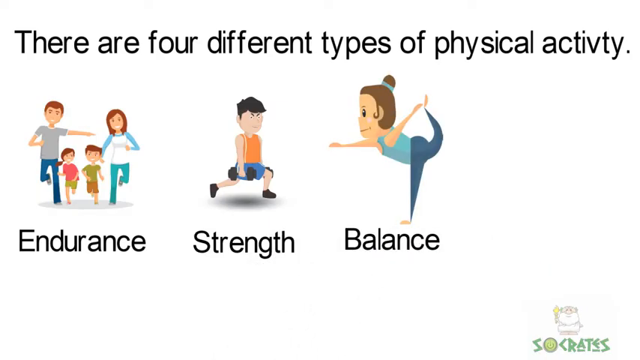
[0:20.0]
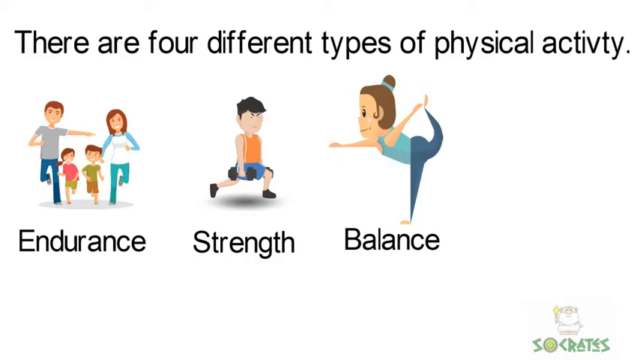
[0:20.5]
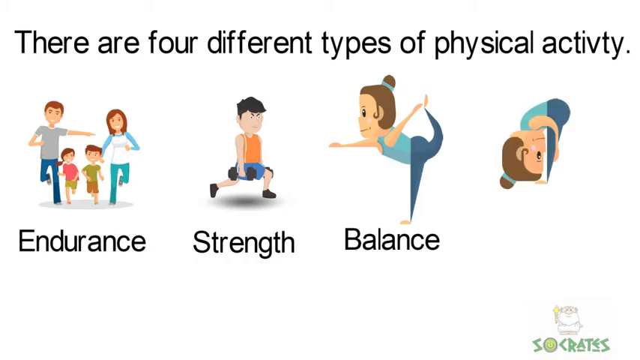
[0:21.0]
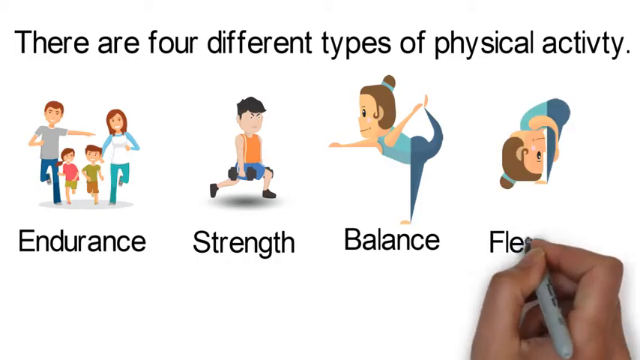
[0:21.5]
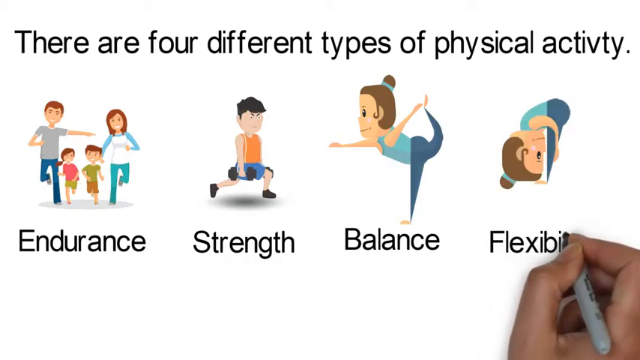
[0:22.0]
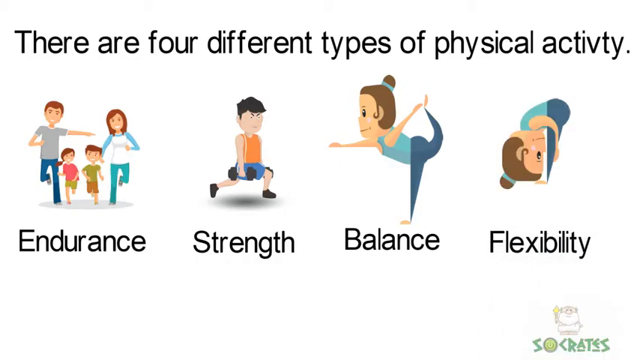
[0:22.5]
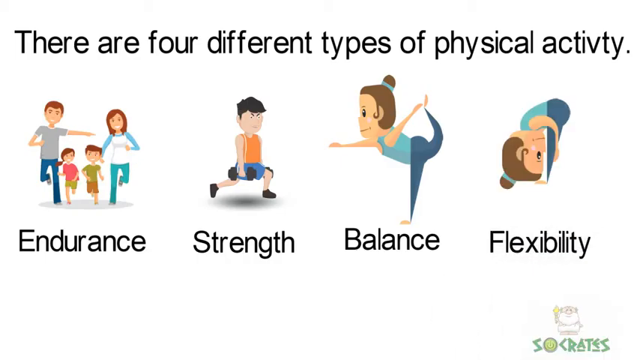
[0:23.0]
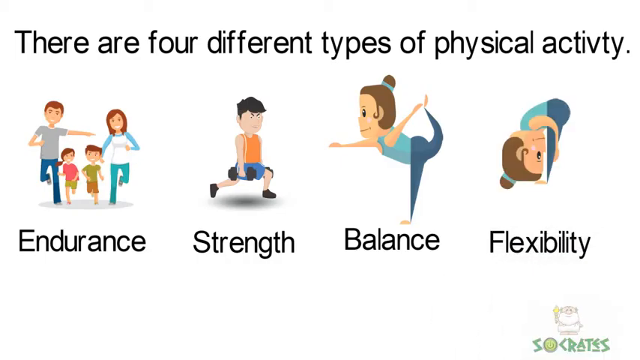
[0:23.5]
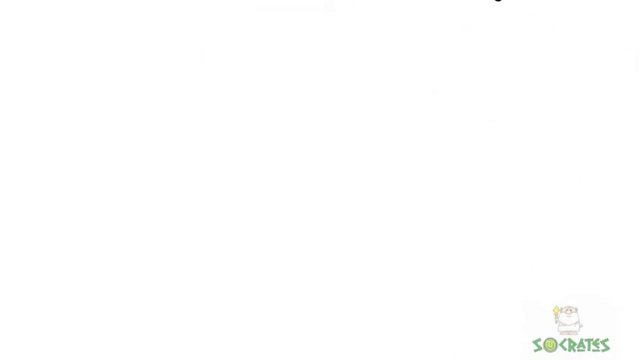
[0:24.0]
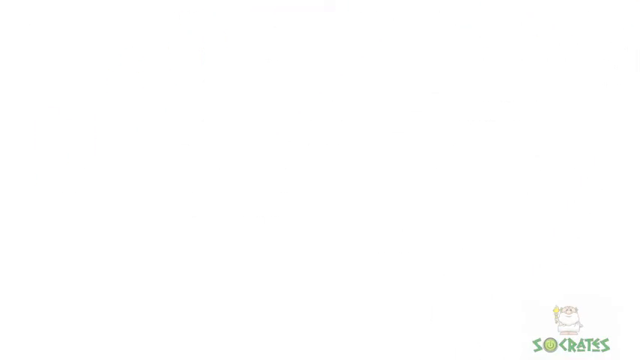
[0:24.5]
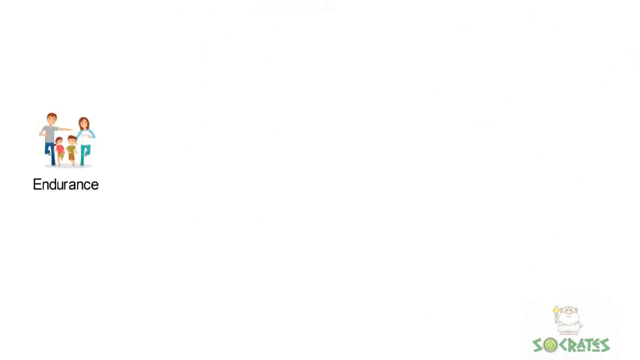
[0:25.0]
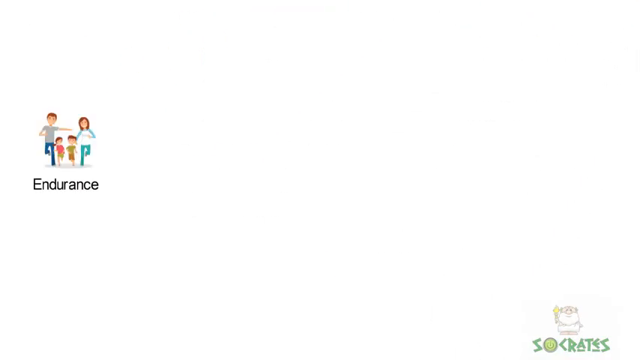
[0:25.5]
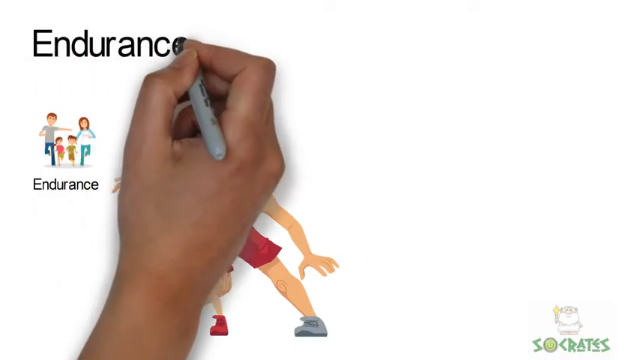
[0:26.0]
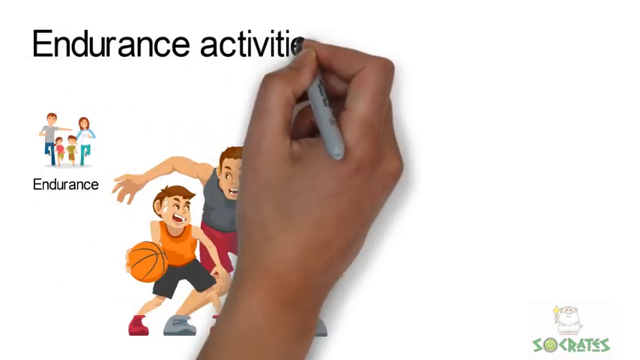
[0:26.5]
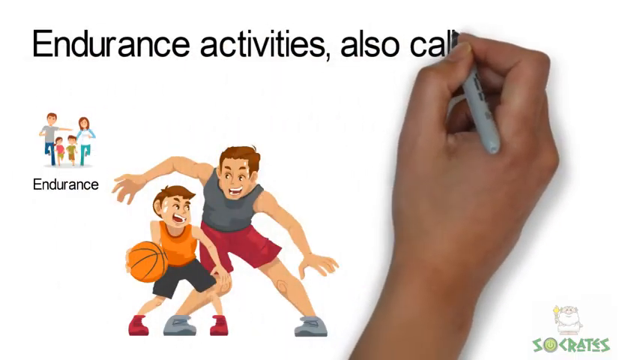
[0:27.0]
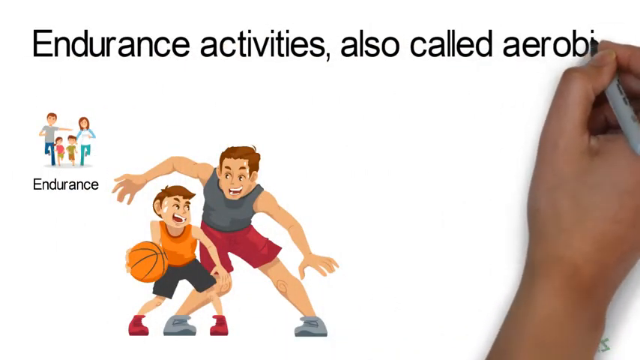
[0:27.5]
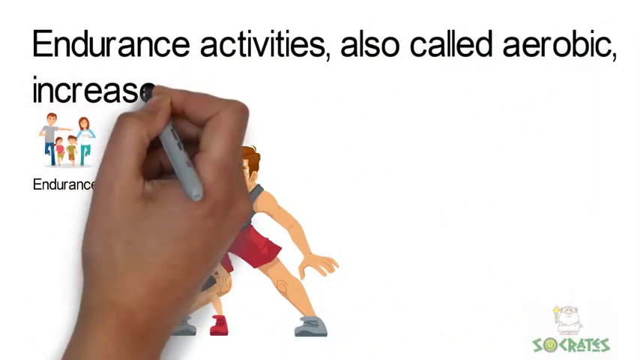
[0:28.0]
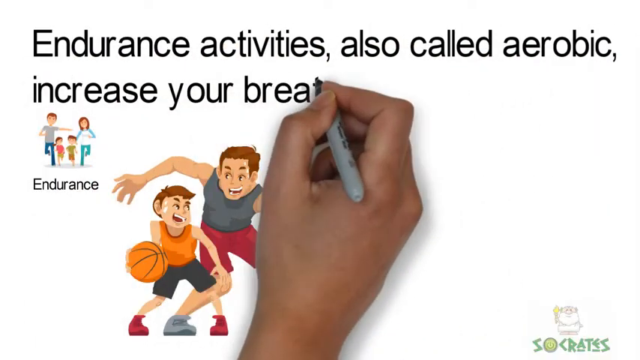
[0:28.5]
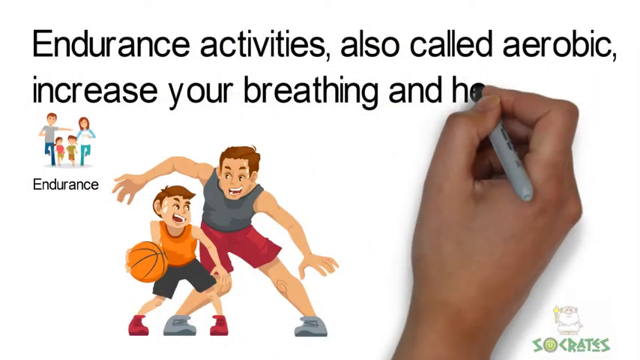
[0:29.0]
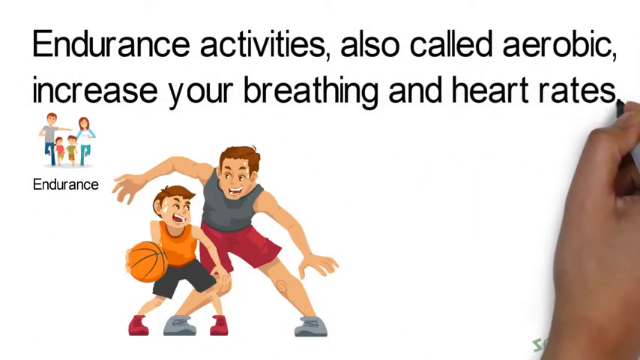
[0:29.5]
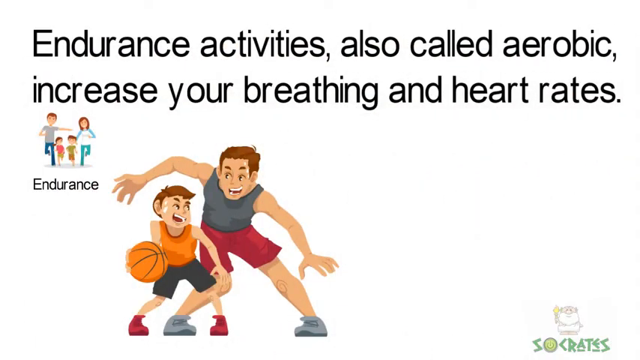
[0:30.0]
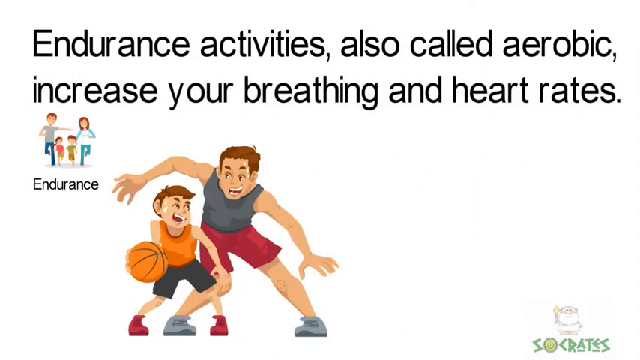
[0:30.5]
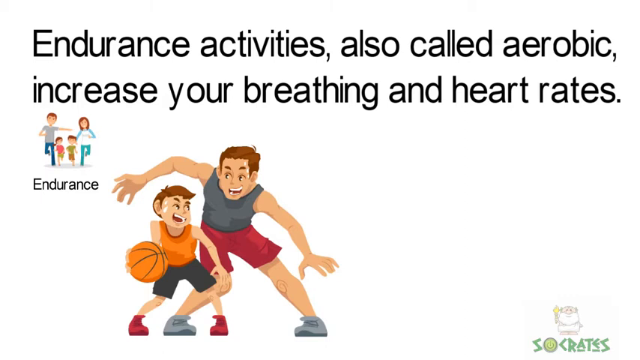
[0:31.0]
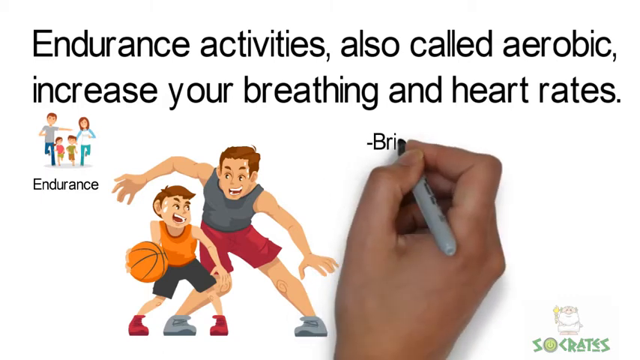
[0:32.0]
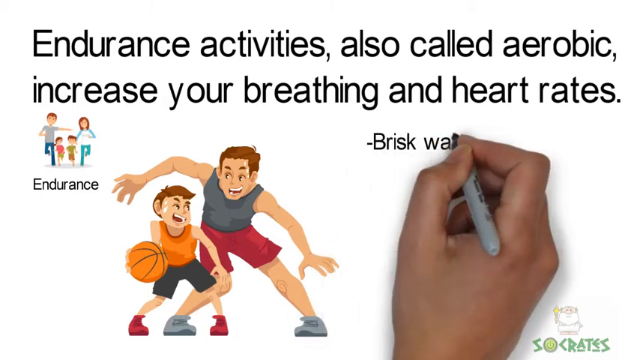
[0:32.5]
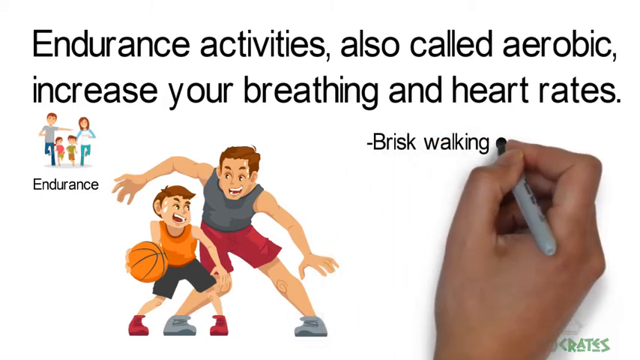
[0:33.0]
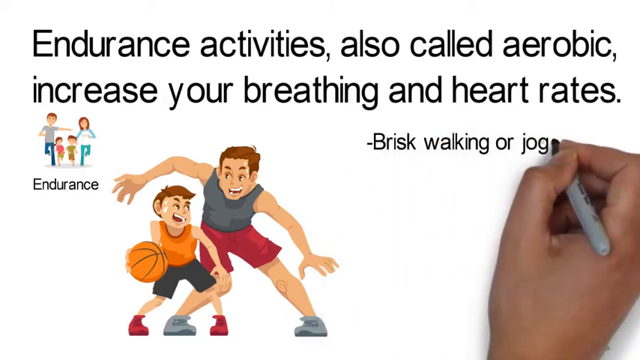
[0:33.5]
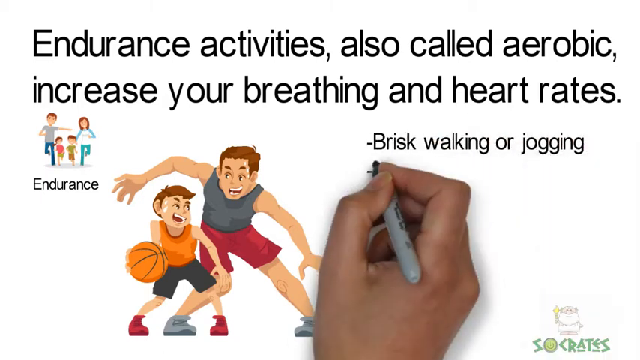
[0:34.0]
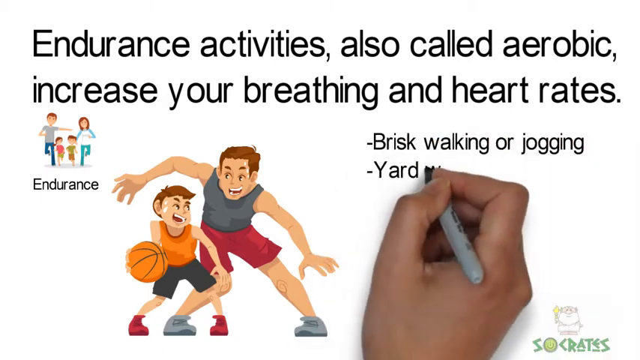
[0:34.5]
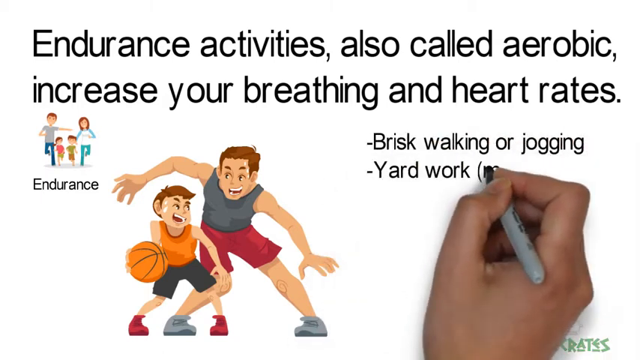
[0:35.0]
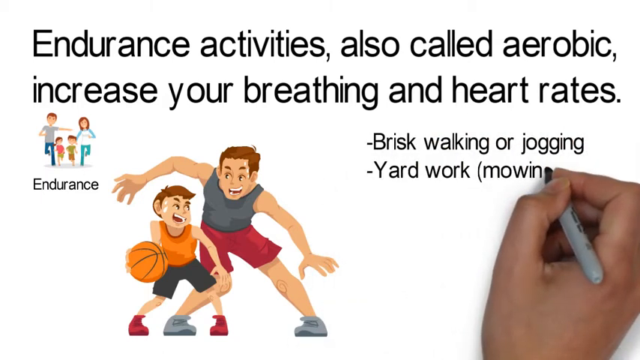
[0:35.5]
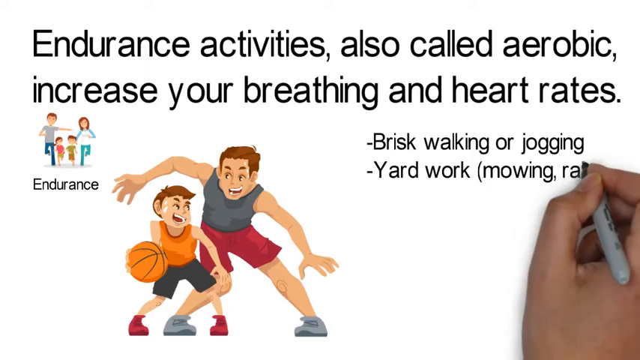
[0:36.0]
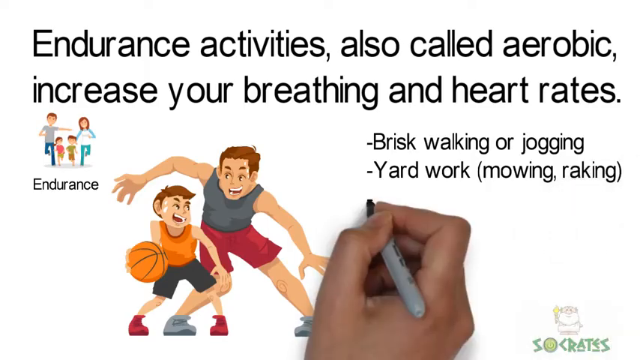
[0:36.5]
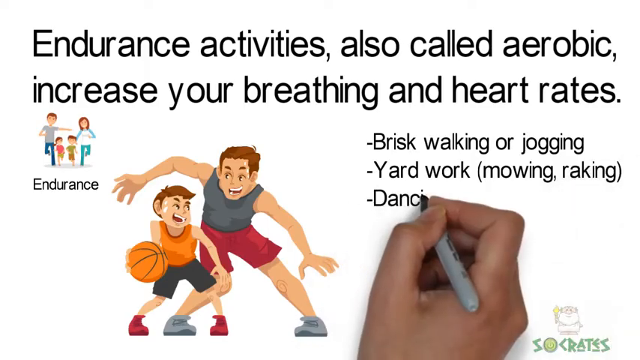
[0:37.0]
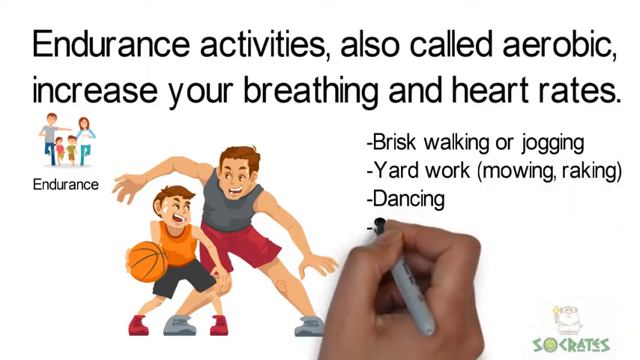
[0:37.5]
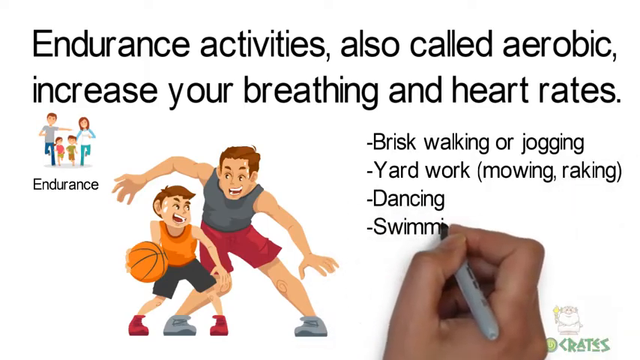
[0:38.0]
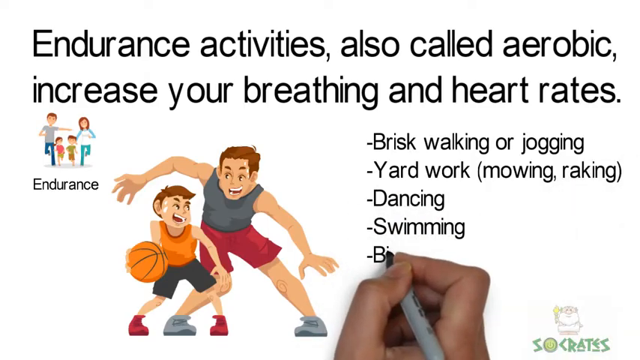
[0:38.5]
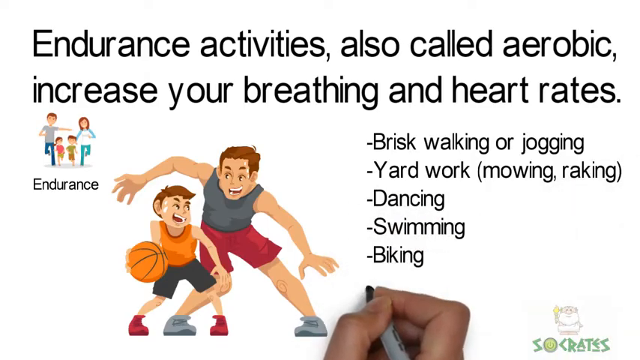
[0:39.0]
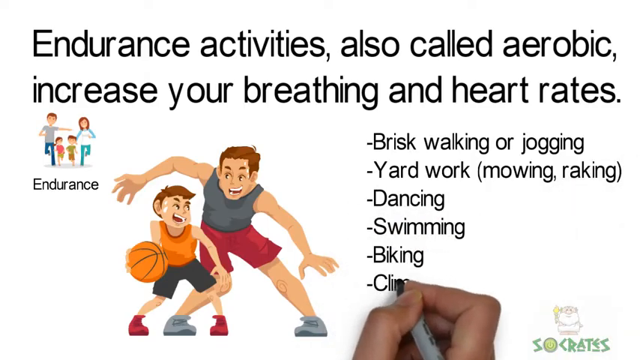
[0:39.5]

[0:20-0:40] On a white screen, black text along the top reads "there are four different types of physical activity." Underneath, on the left side, is a cartoon family: a man with brown hair in a short-sleeved gray shirt and blue pants; to his right a little girl facing the camera with long brown hair, a pink shirt and green shorts; to her right a little boy in a short-sleeved green shirt and brown shorts; and to his right a woman with long hair in a long-sleeved light blue and white shirt and green pants. The word "endurance" is beneath them. To the right is a boy with black hair in an orange tank top, squatting with a barbell in his hand, with the word "strength" under him. To his right a woman stands on one leg with the other bent behind her, holding it with her left hand; she wears green stretch pants and a light blue tank top, and the word "balance" is under her. Then everything goes away, and a hand holding a Sharpie marker writes across the top of the screen: "endurance activities also called aerobics increase your breathing and heart rates," followed by "brisk walking or jogging, yard work, mowing, raking, dancing, swimming, biking, climbing."